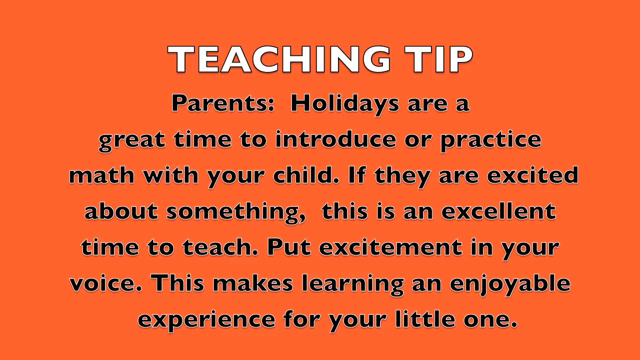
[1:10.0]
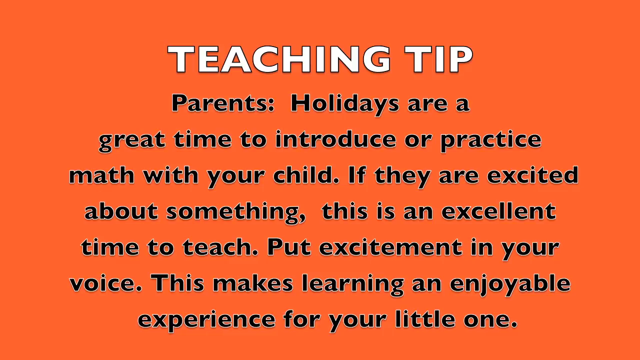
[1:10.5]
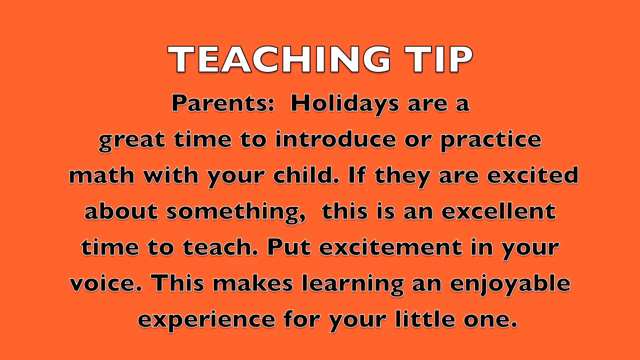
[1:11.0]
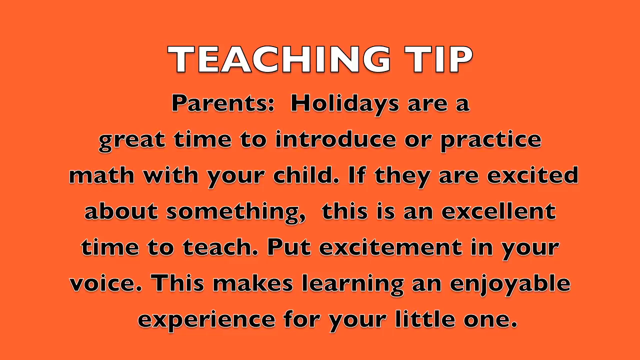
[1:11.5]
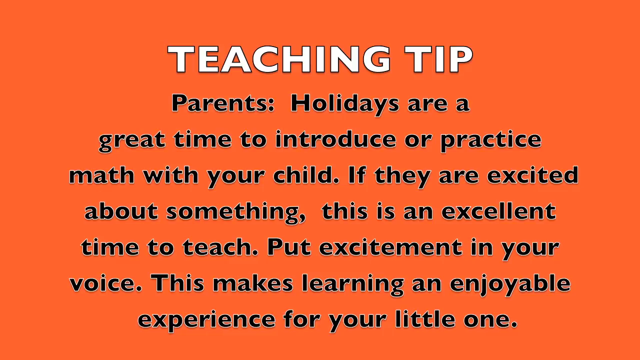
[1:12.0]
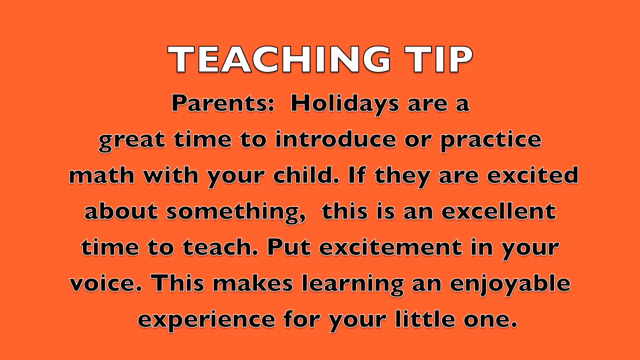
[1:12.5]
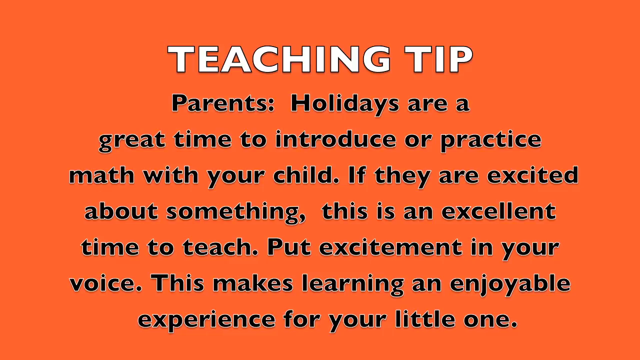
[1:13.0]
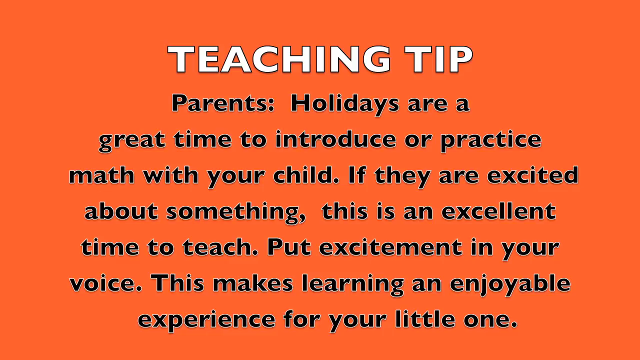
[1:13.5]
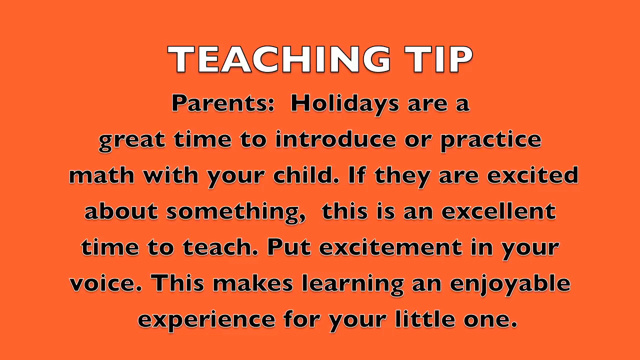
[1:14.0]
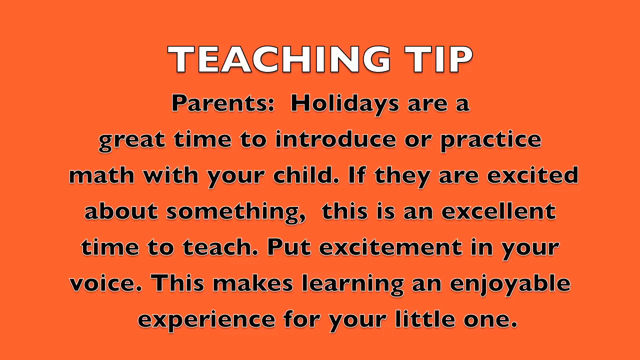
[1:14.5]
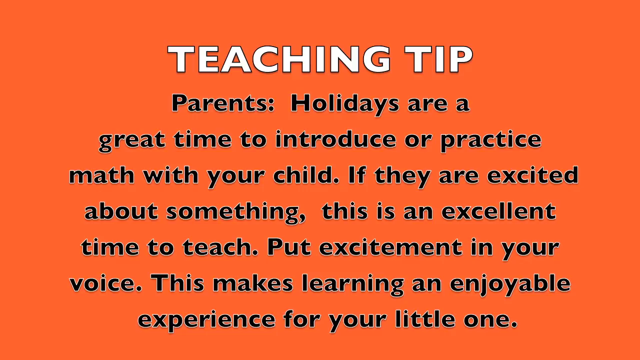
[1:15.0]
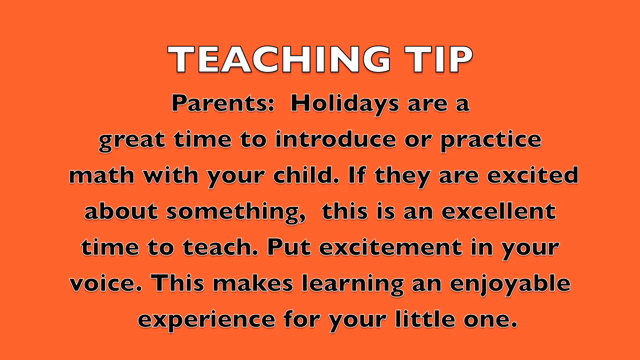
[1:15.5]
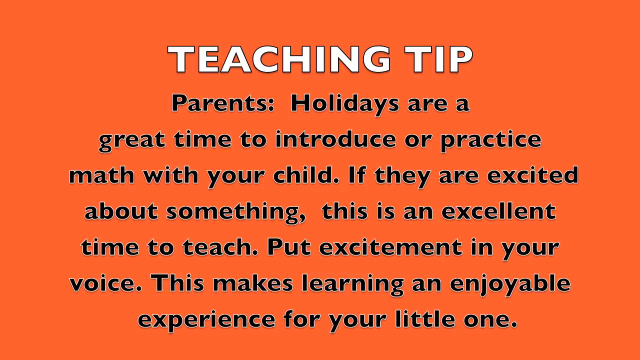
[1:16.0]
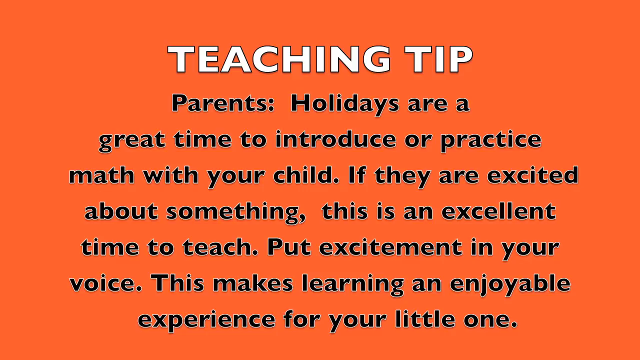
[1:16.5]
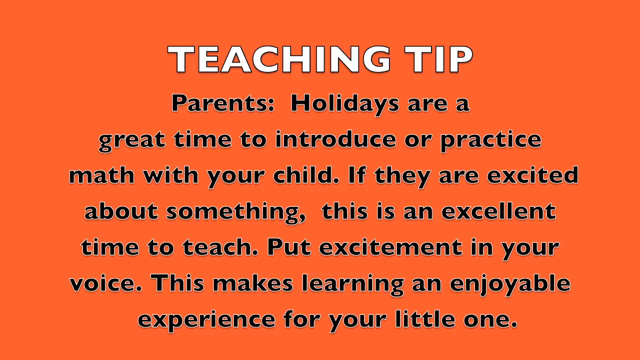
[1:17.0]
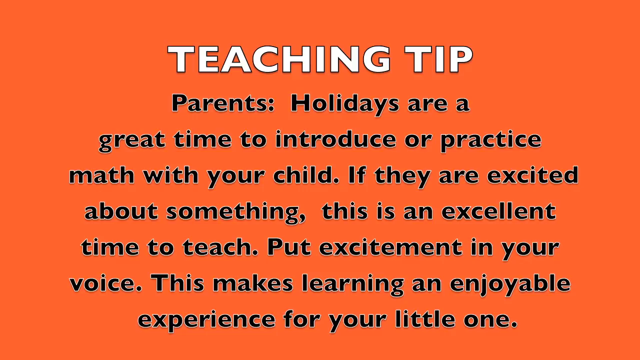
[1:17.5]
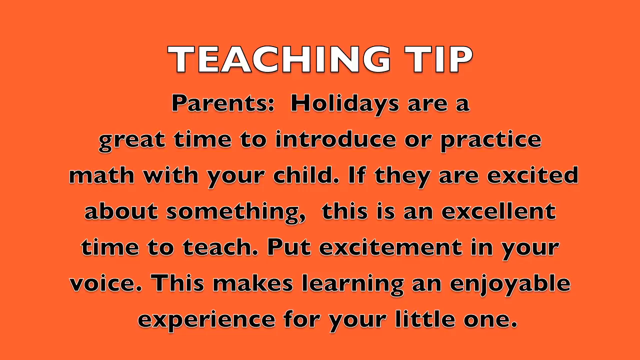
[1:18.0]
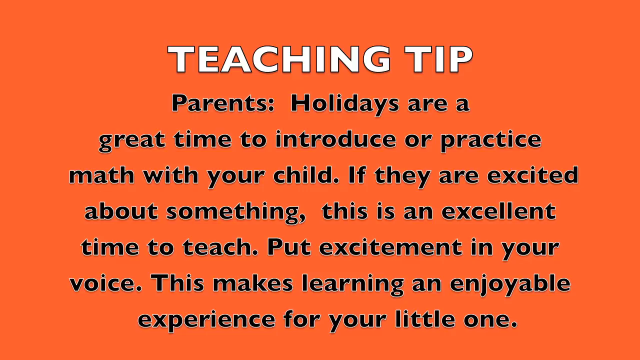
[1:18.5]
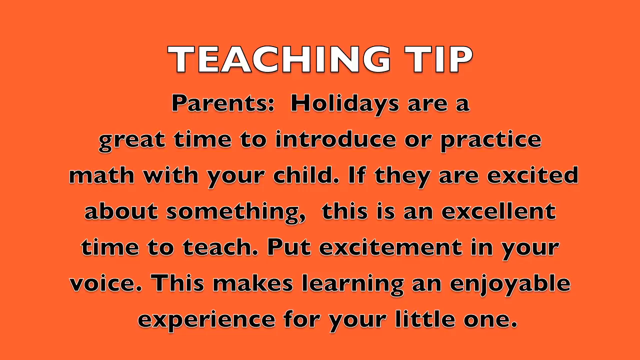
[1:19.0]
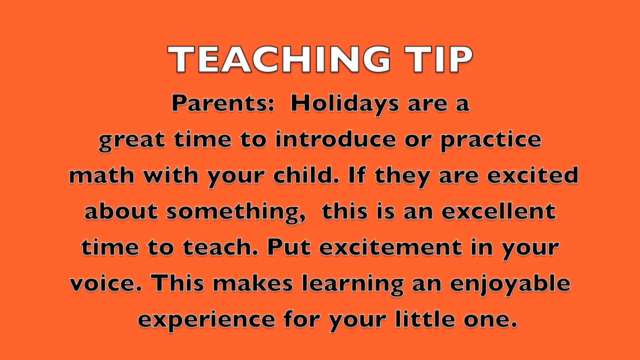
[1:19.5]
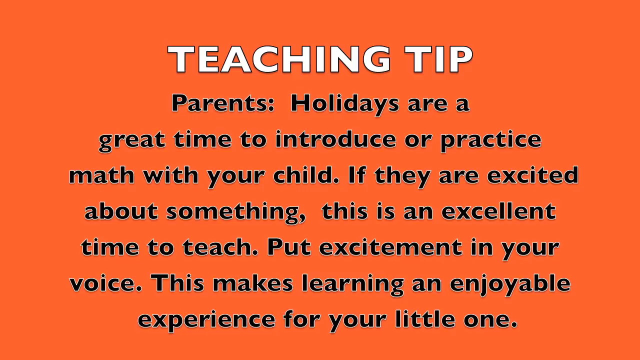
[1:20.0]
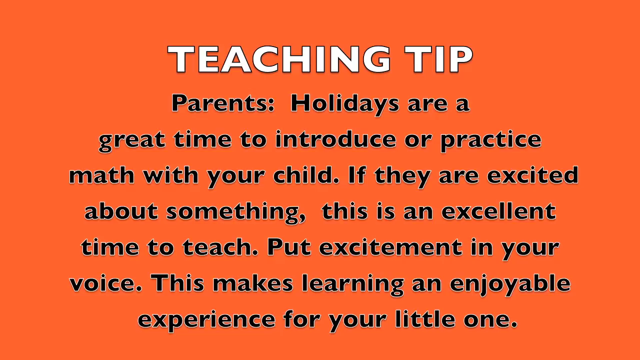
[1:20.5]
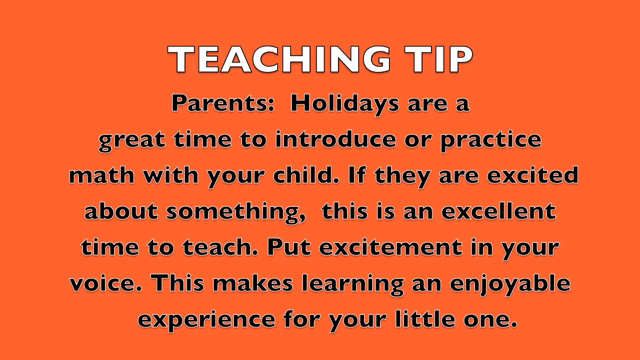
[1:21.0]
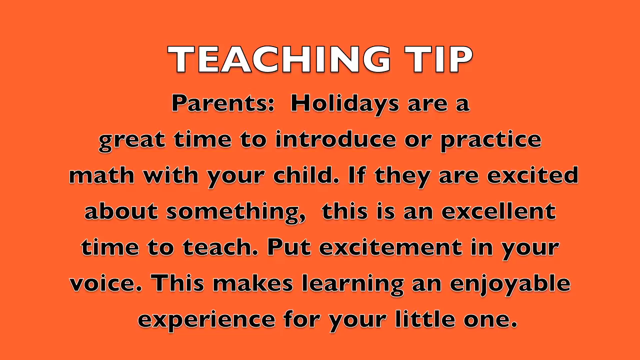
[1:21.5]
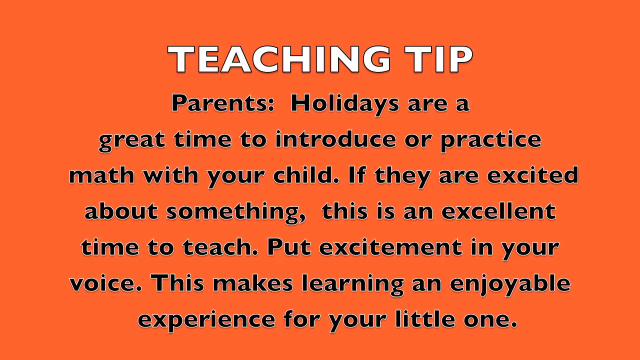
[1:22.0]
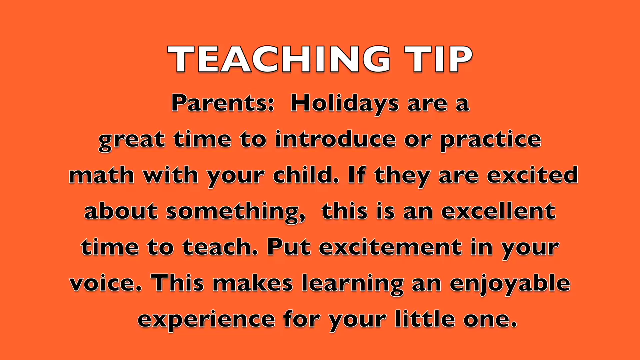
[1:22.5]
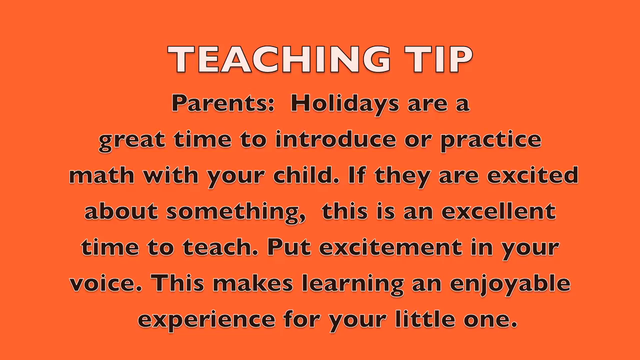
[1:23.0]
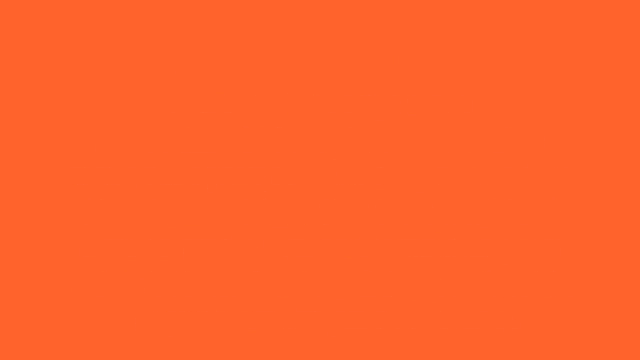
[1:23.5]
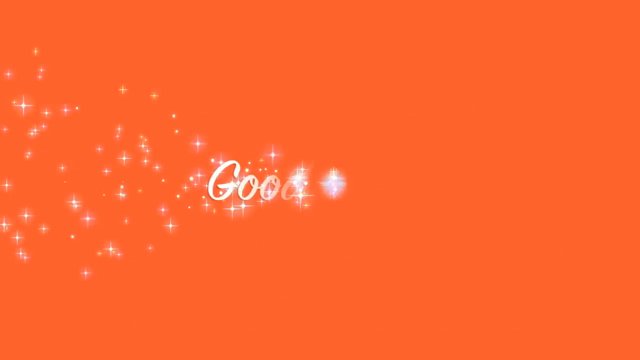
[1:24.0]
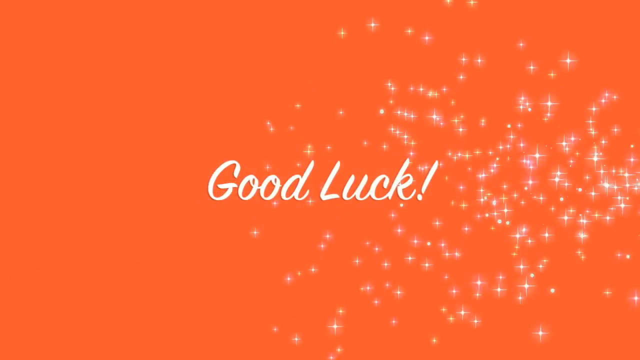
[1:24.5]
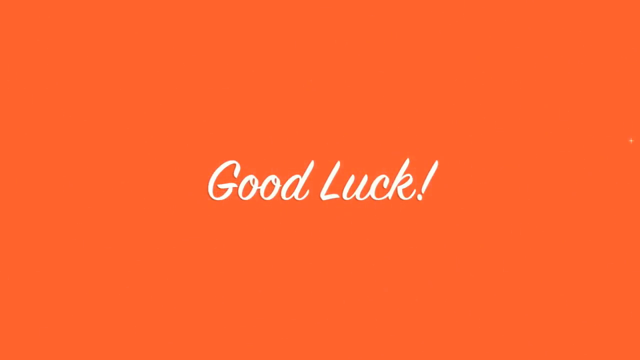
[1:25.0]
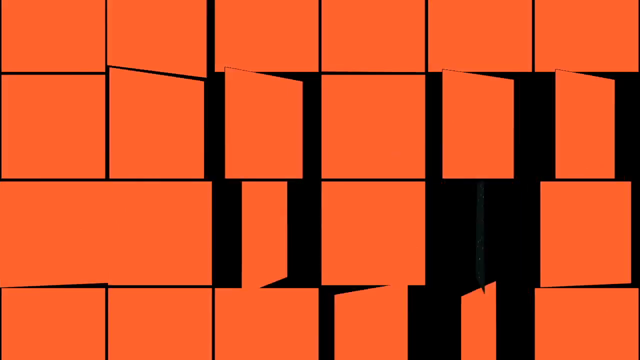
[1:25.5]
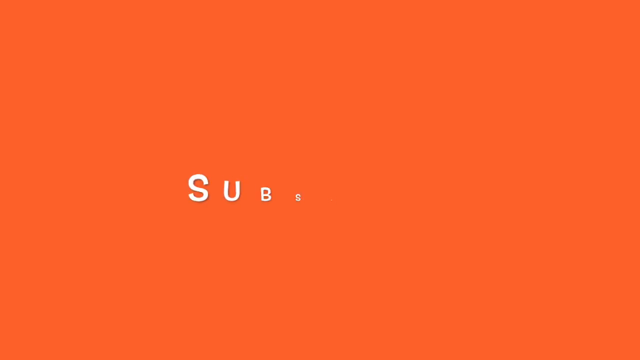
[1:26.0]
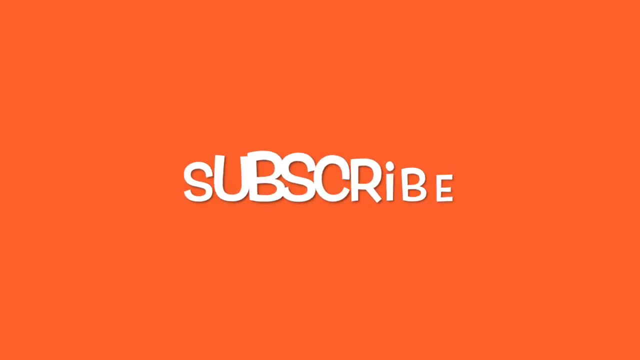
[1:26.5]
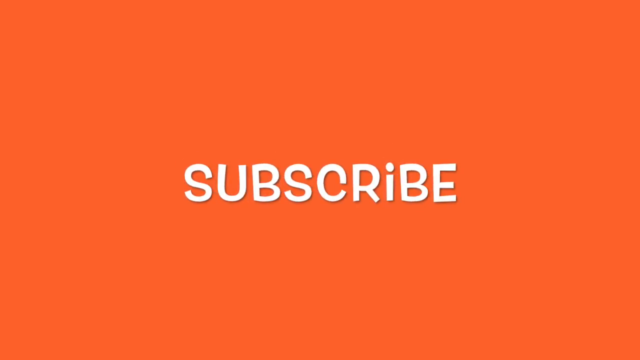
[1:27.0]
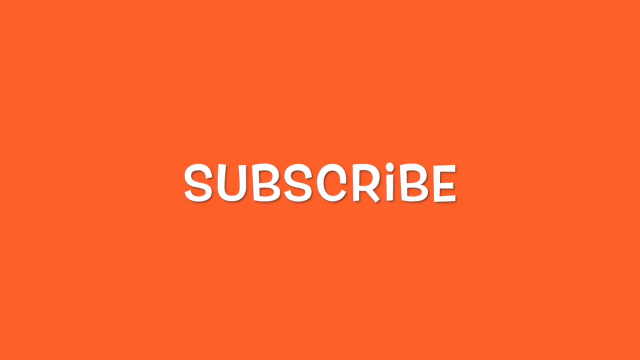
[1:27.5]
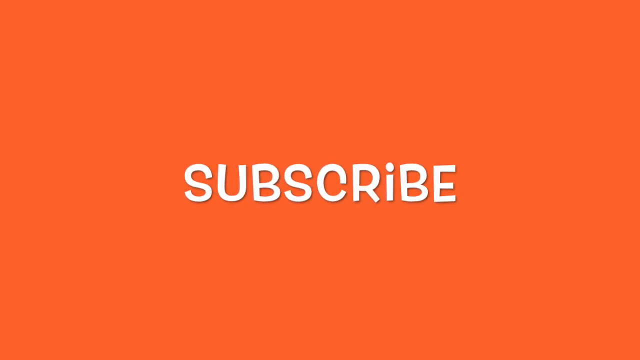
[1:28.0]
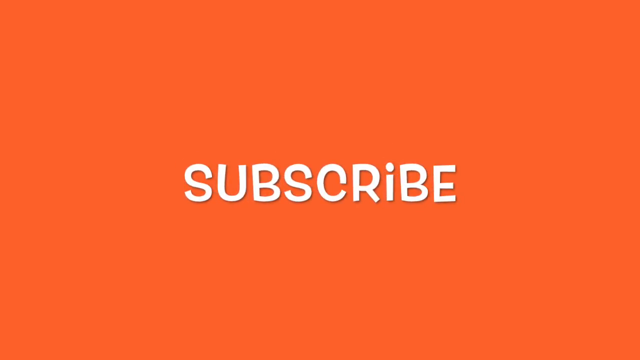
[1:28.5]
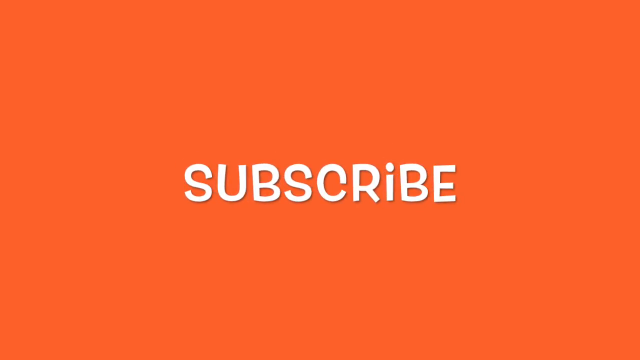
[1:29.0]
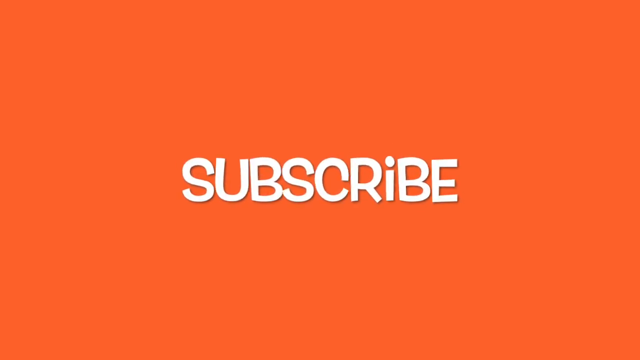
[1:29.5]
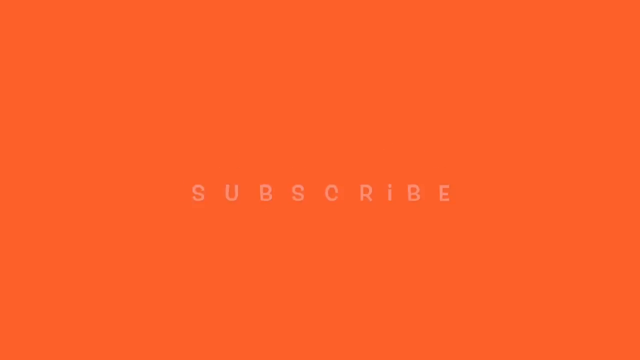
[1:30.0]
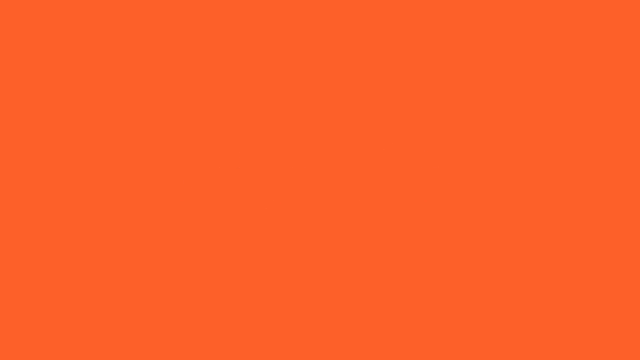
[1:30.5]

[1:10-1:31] Text appears on the screen: "Teaching Tip. Parents, holidays are a great time to introduce or practice math with your child. If they are excited about something, this is an excellent time to teach. Put excitement in your voice. This makes learning an enjoyable experience for your little one." The words "teaching tip" are in white capital letters with a black outline; the rest of the words are black, in upper and lower case, with a faint white outline. All of the text has a faint drop shadow. The screen then turns orange again, and "good luck" appears in white script writing across the front. On the right side, a bunch of twinkly white stars bubble onto the screen, and the word "subscribe" animates into place.